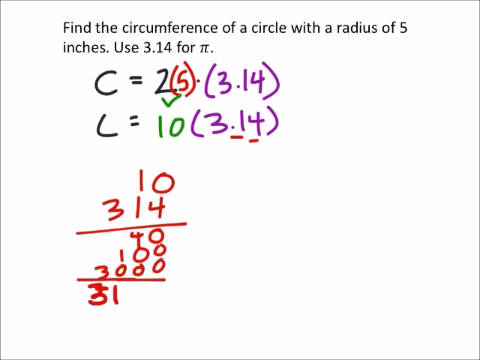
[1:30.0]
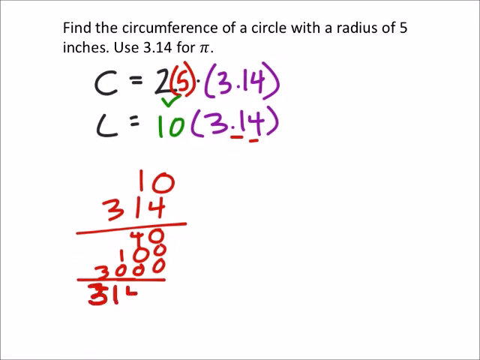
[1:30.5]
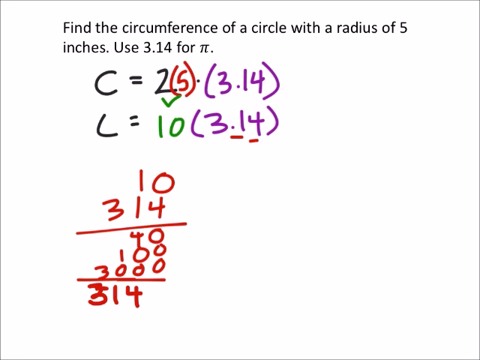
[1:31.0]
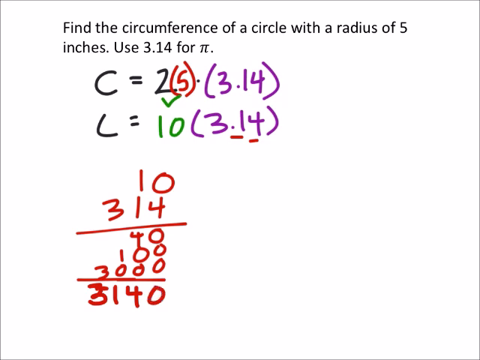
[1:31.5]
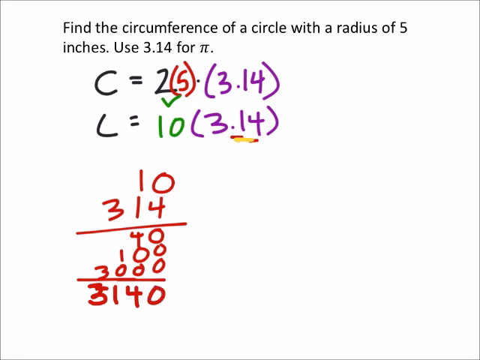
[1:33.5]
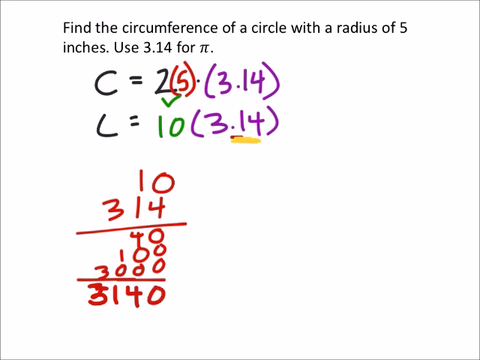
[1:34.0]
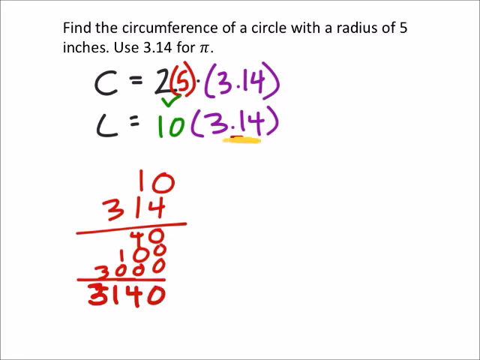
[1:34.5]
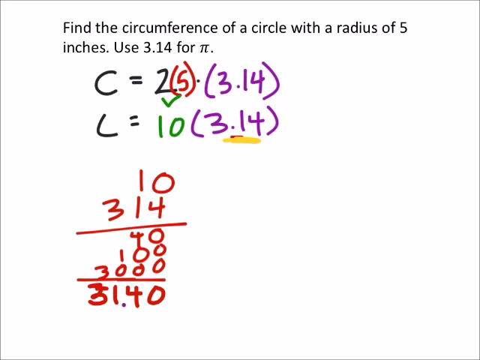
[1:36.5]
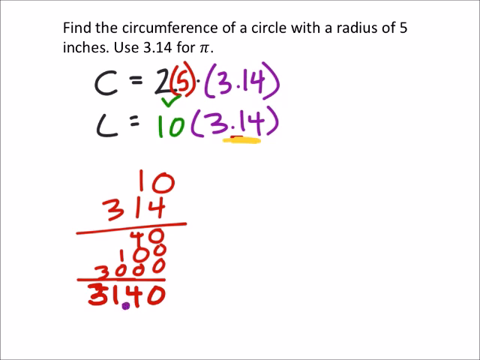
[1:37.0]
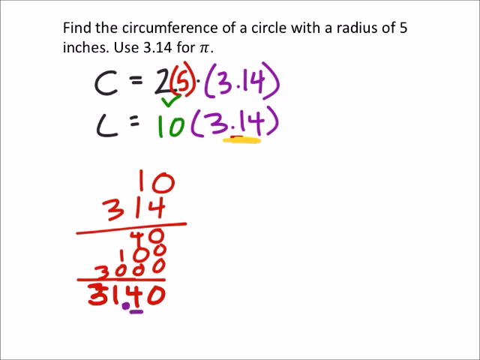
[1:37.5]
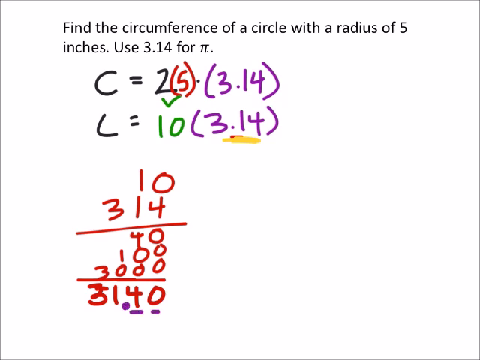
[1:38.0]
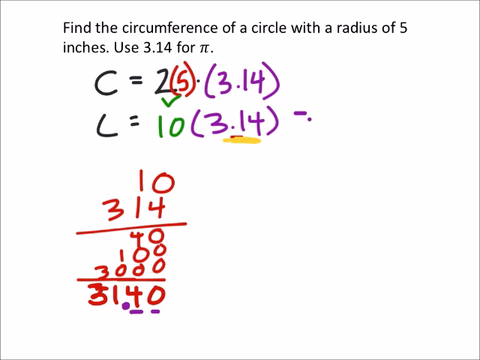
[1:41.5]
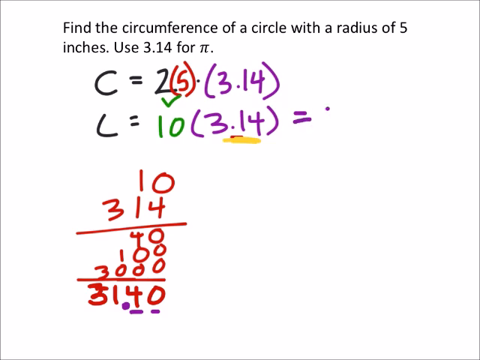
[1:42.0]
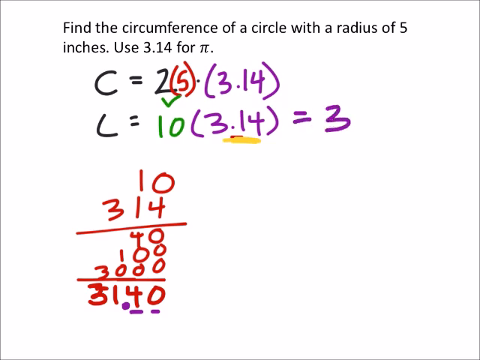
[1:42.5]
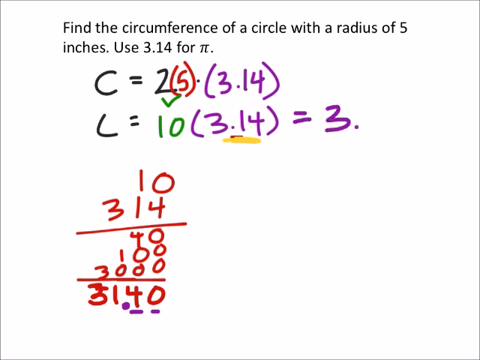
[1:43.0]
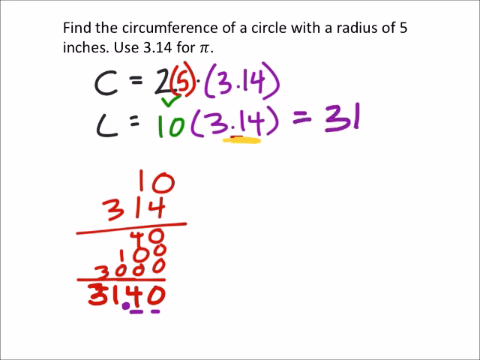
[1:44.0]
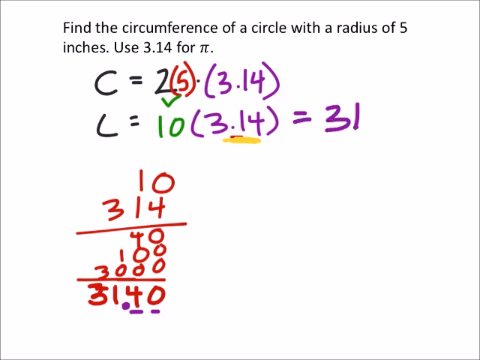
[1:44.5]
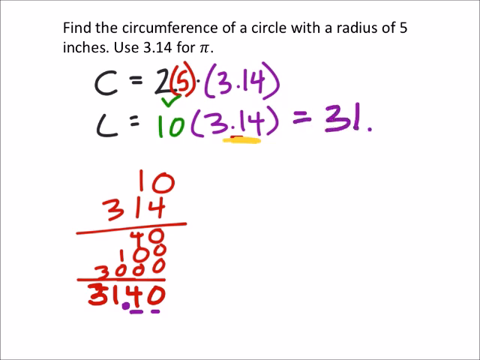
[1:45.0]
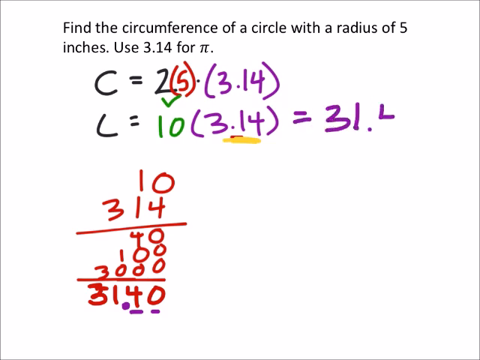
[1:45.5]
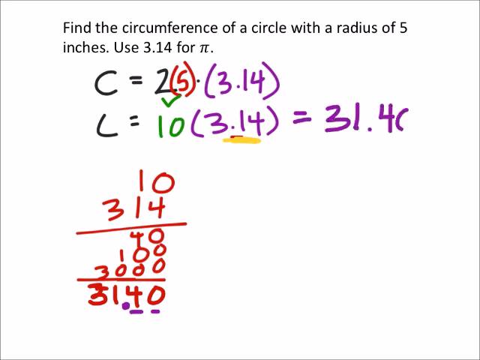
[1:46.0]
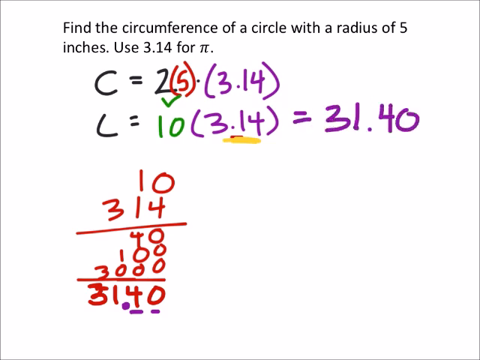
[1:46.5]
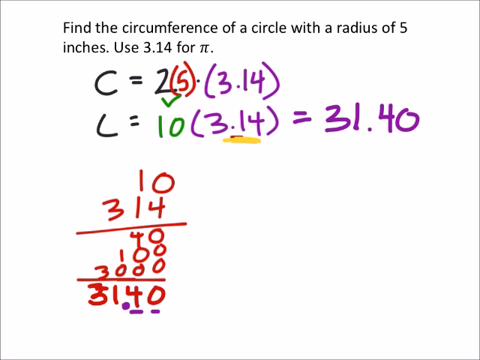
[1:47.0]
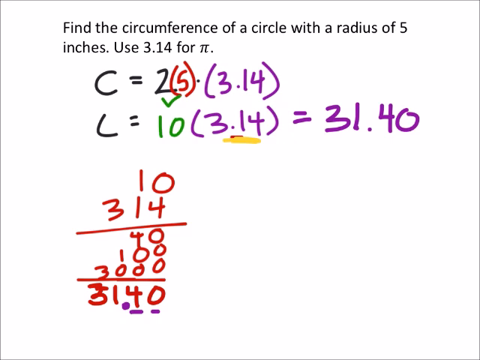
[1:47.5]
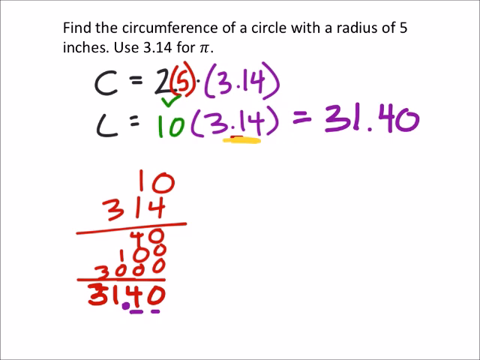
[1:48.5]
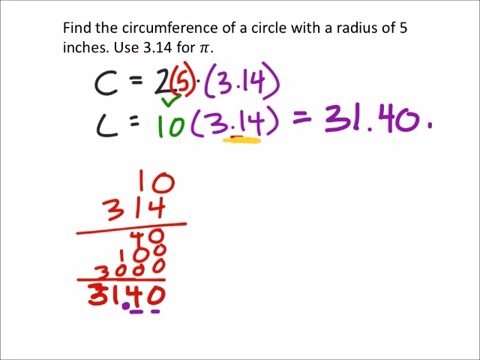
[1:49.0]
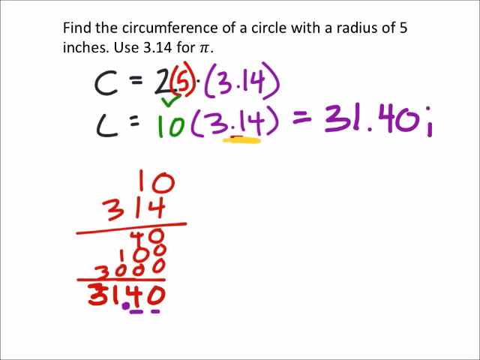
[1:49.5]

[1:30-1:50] The problem "find the circumference of a circle with a radius of 5 inches. Use 3.14 for Pi" continues to be solved, with pens in various colours used for the working. In the lower right corner, in red ink, is a vertical list of numbers: 10, 314, a horizontal line, then 40, 100 and 3,000, with another horizontal line under that. Below it, the answer to the sum is 3,140. A yellow pen then underlines the second 3.14 written in purple pen at the top of the working. Purple pen then draws a dot and two dashes under the number 3,140 at the bottom of the page. The purple pen then moves to the top right of the page and, to the right of the second purple 3.14, writes "= 31.40".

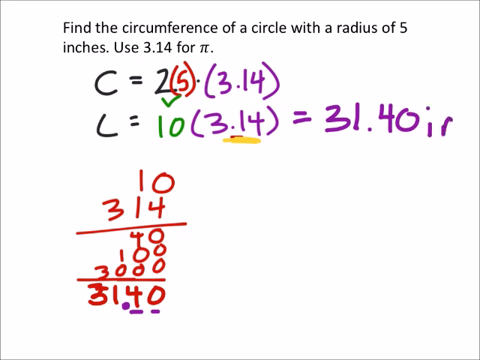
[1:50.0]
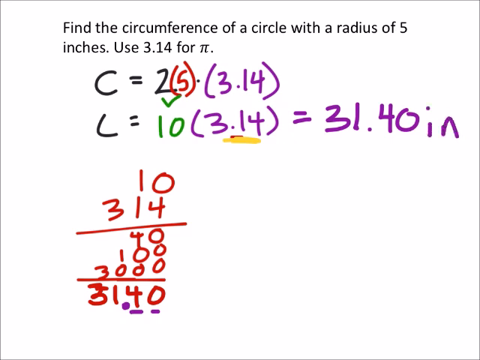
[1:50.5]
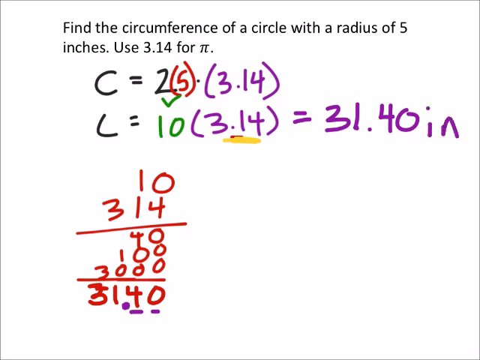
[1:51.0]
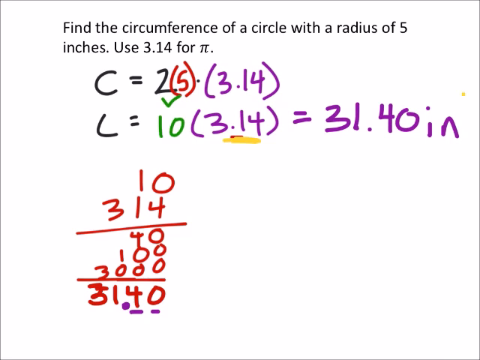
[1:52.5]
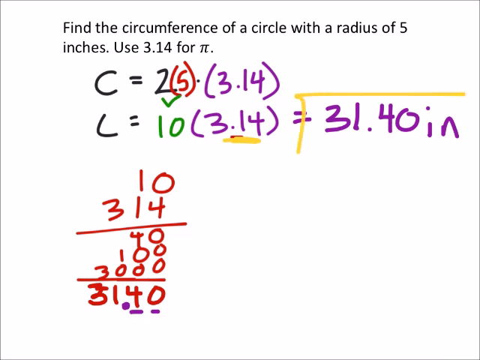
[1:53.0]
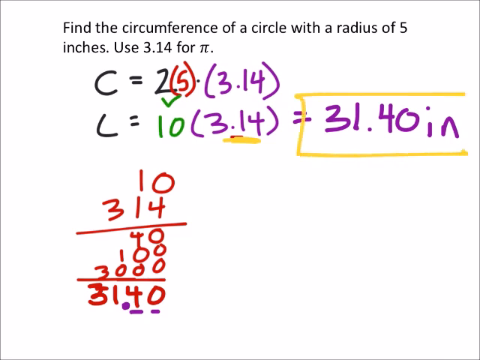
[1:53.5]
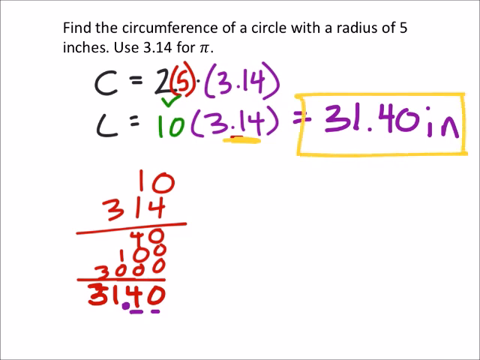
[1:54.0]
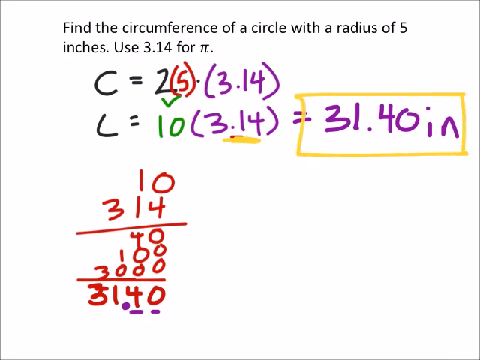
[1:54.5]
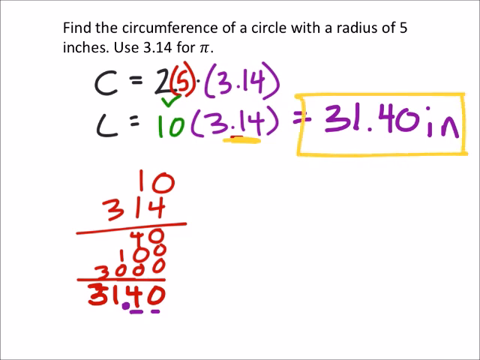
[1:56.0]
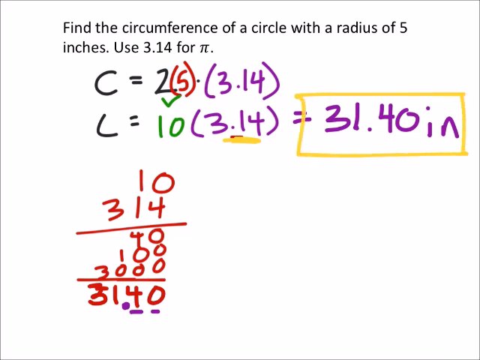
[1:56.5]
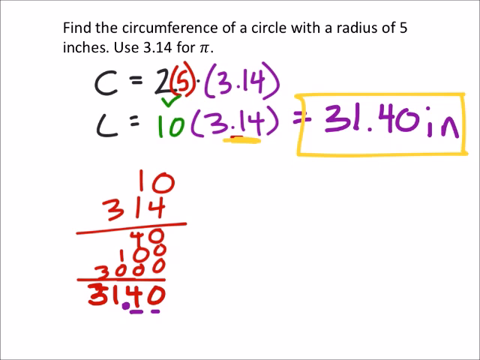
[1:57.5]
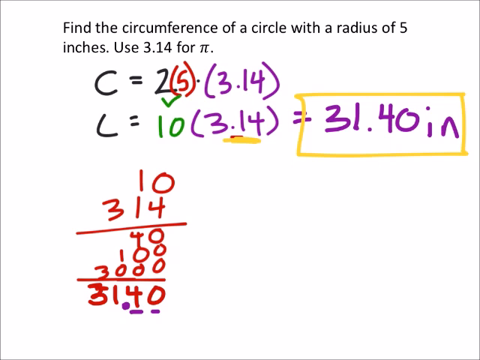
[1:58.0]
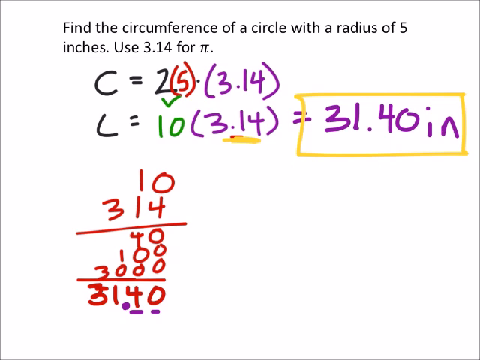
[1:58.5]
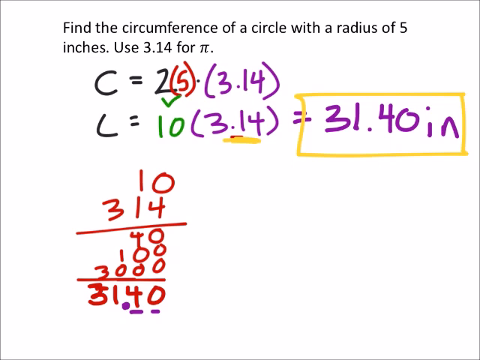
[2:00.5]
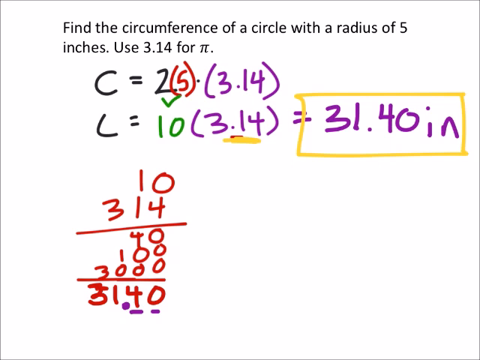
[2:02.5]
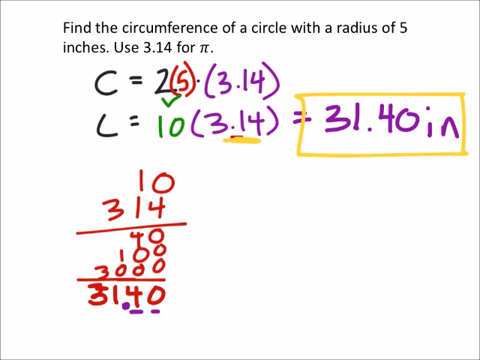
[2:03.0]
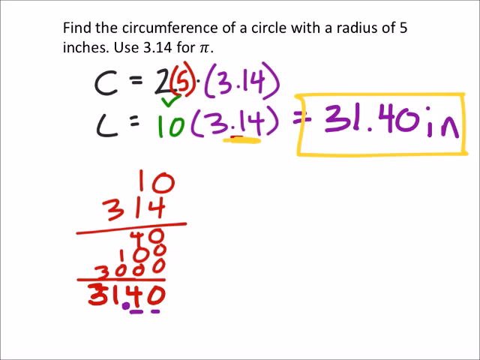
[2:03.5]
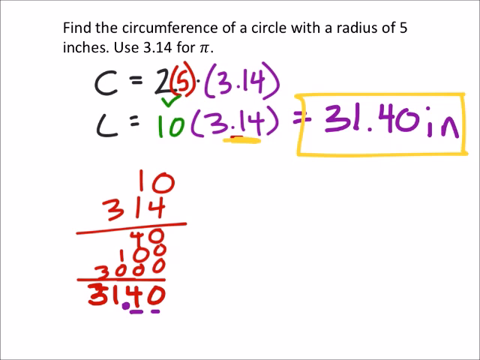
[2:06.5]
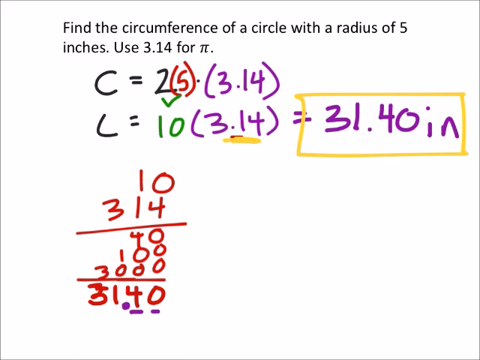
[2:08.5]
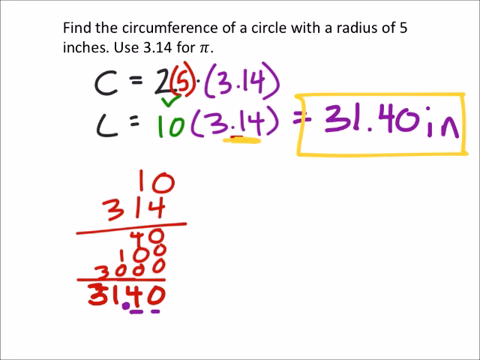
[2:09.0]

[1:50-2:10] The working continues in various colours of digital ink beneath the problem "find the circumference of a circle with a radius of 5 inches. Use 3.14 for pi." Handwritten working in black, red, green, purple and yellow pen is visible. The solution is written in purple ink at the top right of the screen, reading "= 31.40 inches". A yellow horizontal rectangle is then drawn around this solution. The screen then stays static, like a frozen image, for 10 to 15 seconds. The different ink colours make the steps of the working easy to follow.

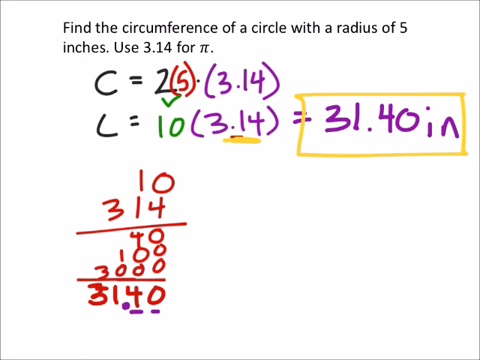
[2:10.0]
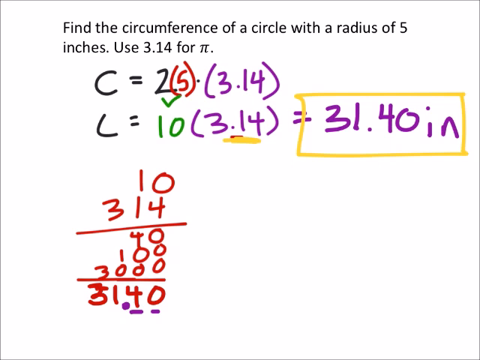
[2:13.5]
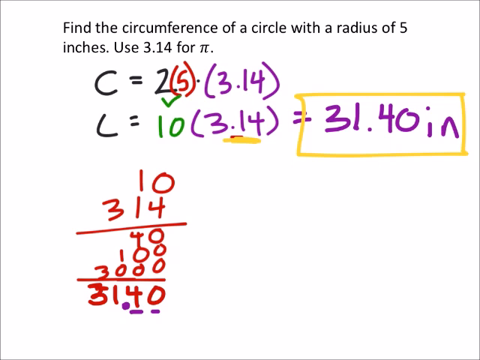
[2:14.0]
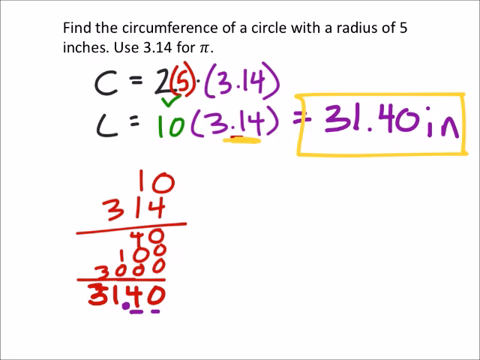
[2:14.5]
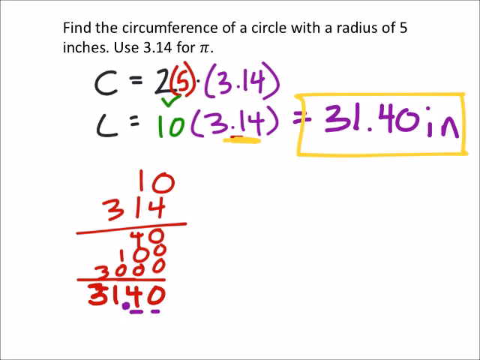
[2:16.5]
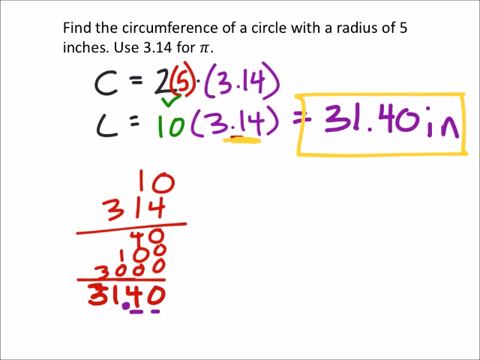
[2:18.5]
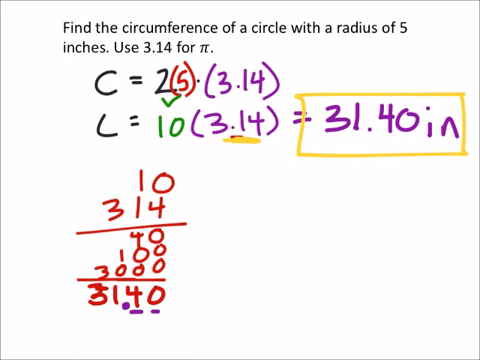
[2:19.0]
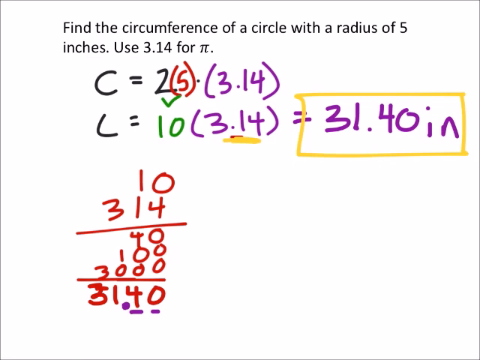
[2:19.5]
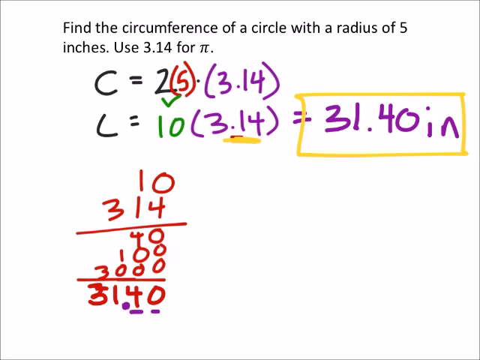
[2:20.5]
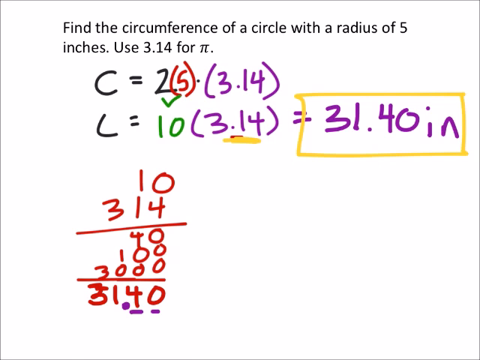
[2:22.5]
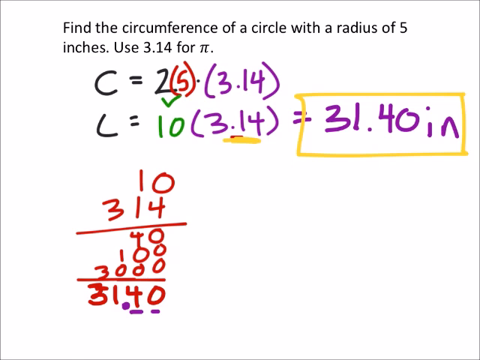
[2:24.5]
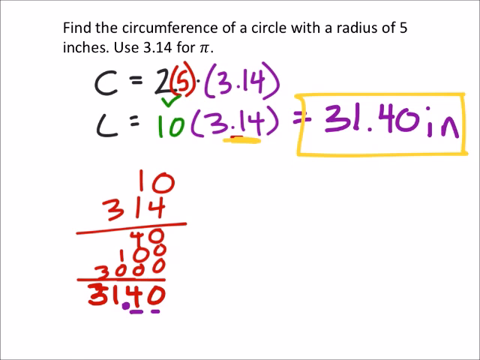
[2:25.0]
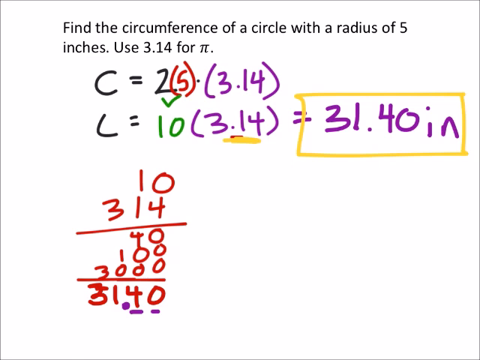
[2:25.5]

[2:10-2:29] All of the working out for the problem is visible. The printed text at the top of the screen reads "find the circumference of a circle with a radius of 5 inches, use 3.14 for pi." It is followed by numbers and sums written horizontally across the first two lines and then vertically underneath on the left side of the screen. The solution is highlighted by a yellow horizontal rectangle drawn around purple letters reading "31.40 inches". The working is handwritten in pen in five different colours that show the sequence of steps. The image stays static.